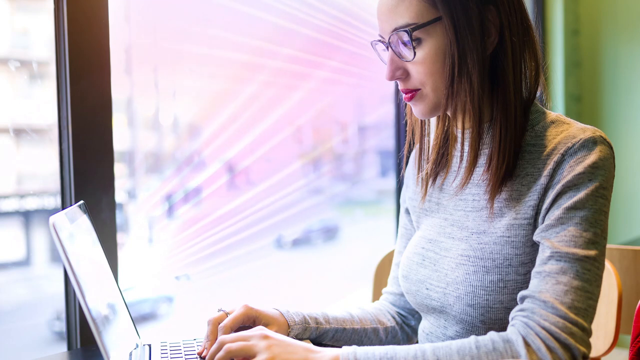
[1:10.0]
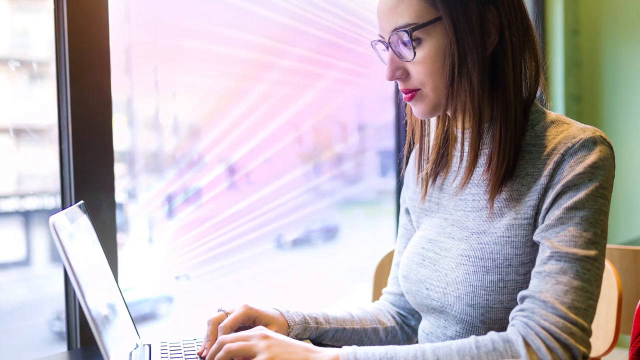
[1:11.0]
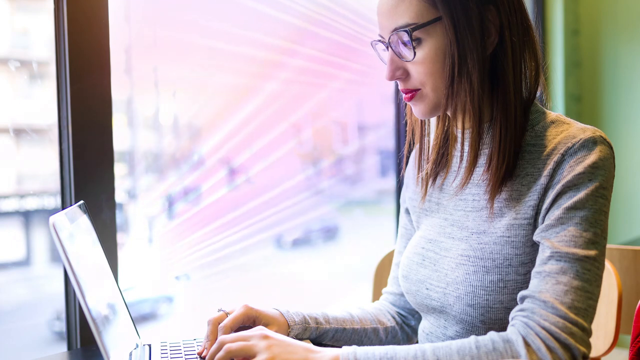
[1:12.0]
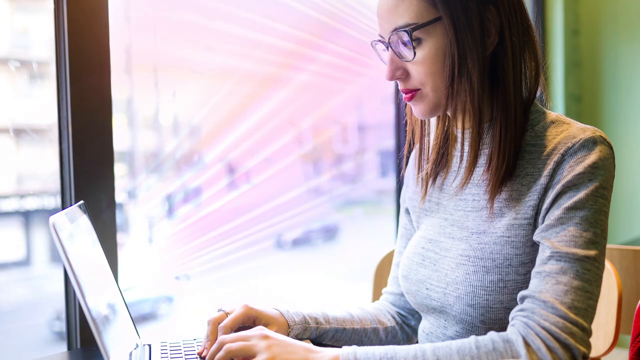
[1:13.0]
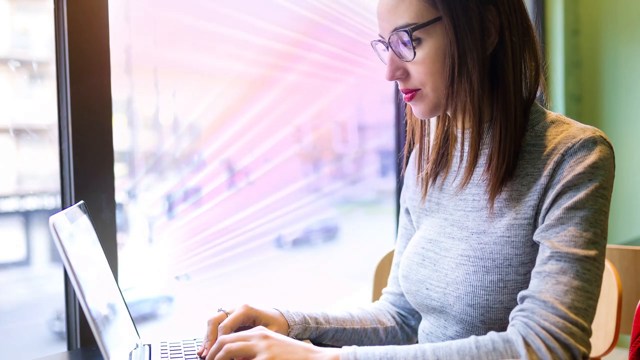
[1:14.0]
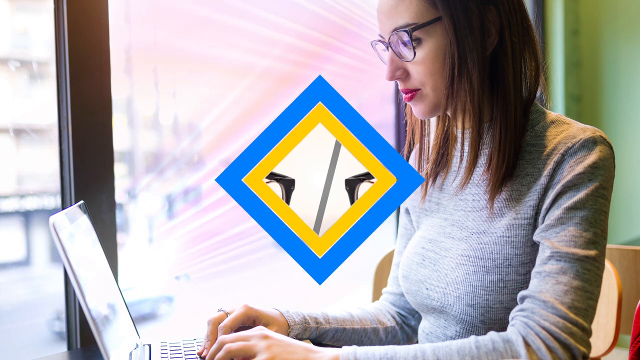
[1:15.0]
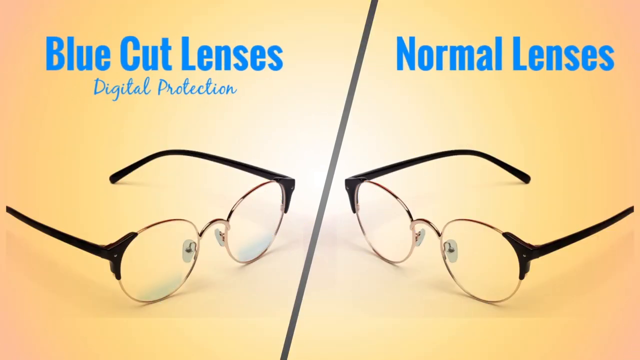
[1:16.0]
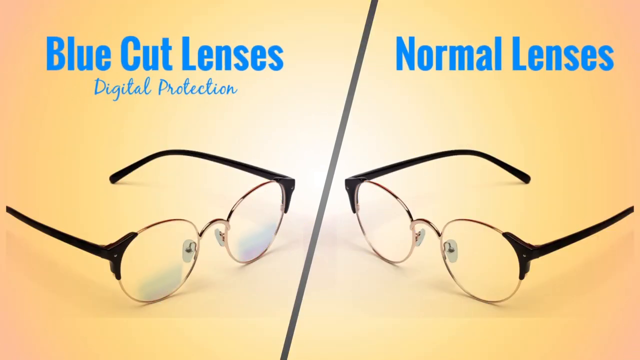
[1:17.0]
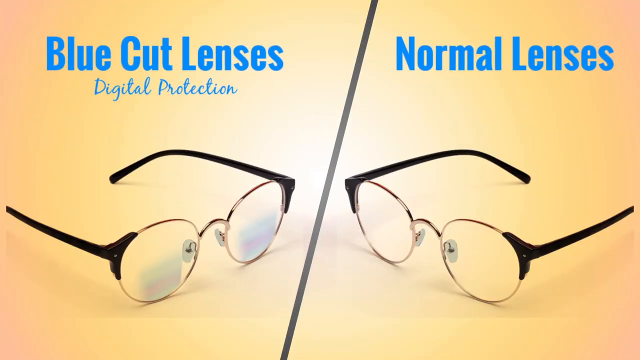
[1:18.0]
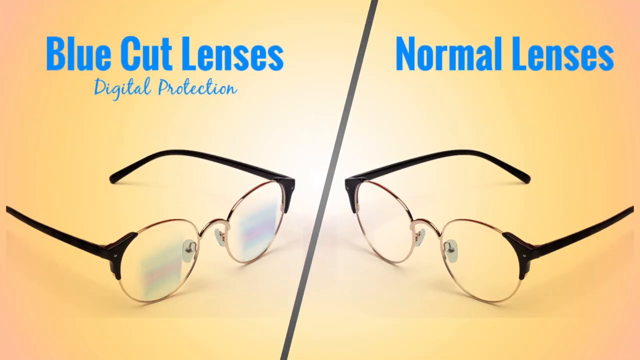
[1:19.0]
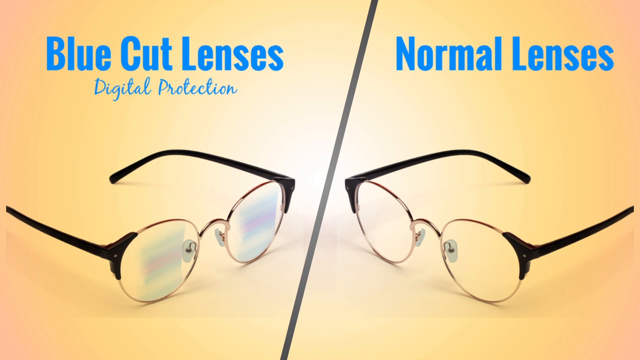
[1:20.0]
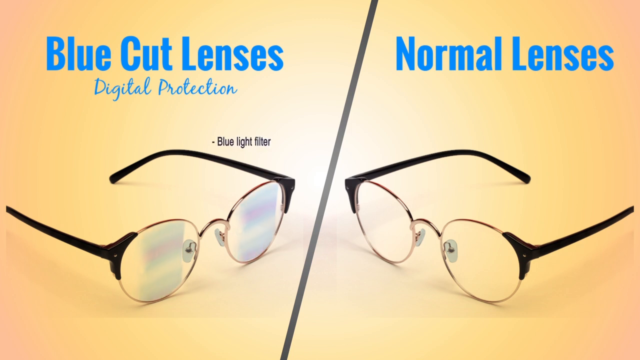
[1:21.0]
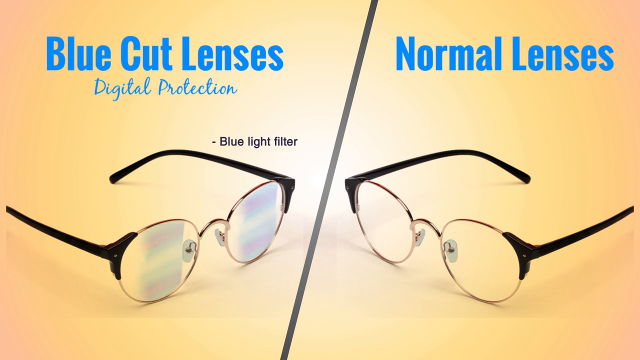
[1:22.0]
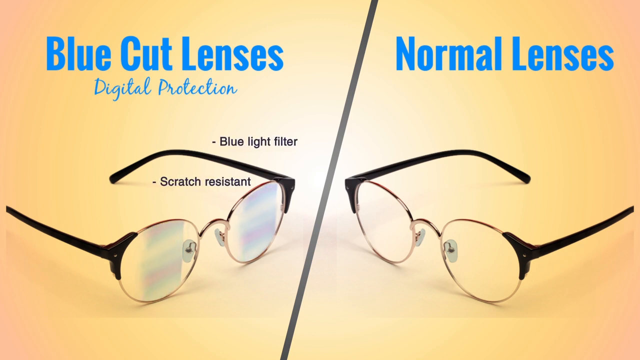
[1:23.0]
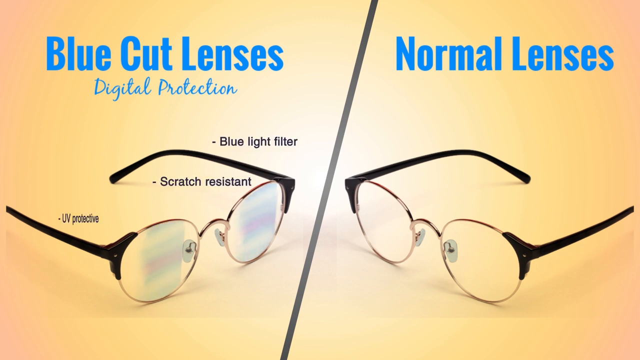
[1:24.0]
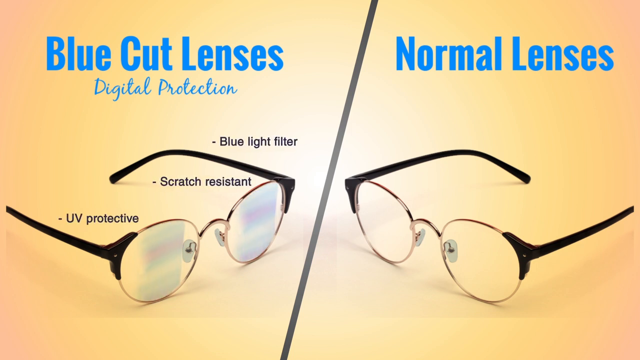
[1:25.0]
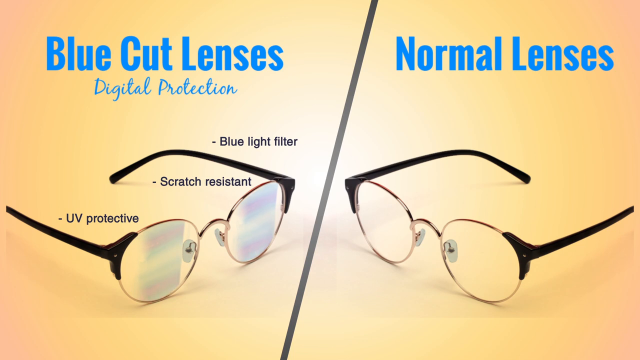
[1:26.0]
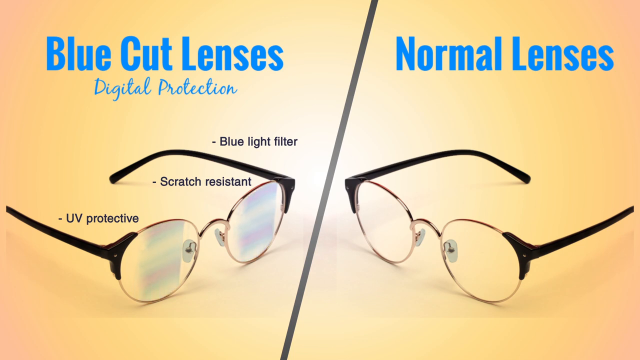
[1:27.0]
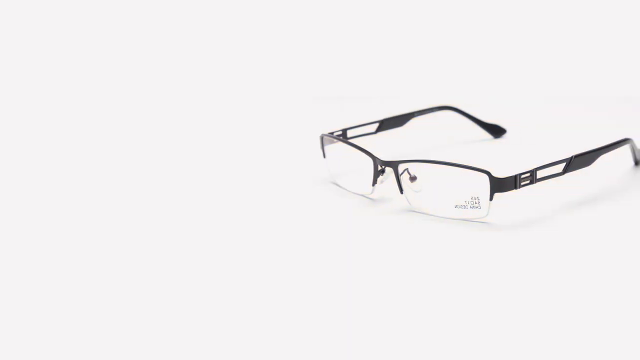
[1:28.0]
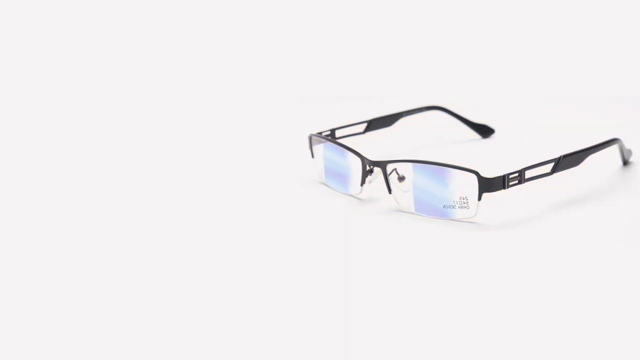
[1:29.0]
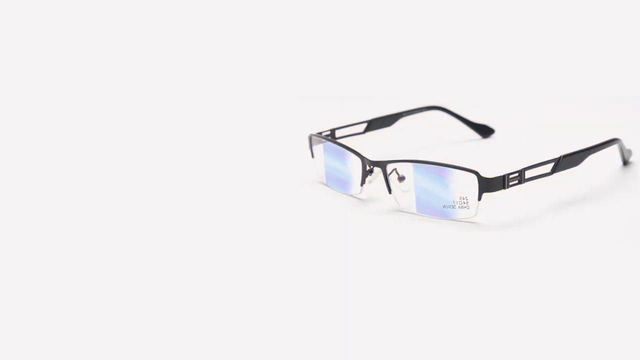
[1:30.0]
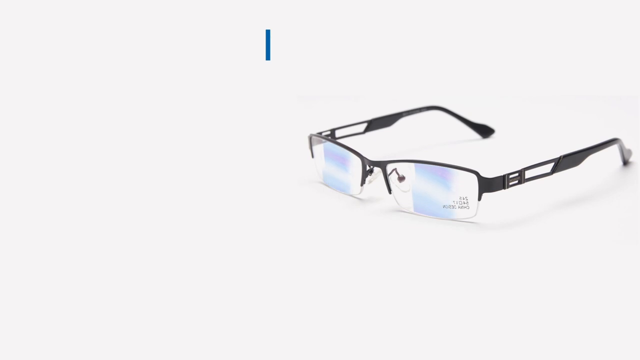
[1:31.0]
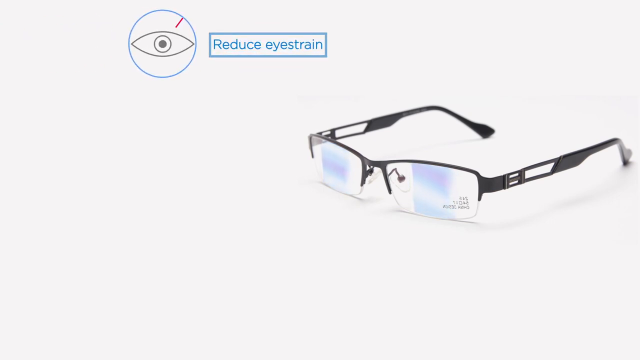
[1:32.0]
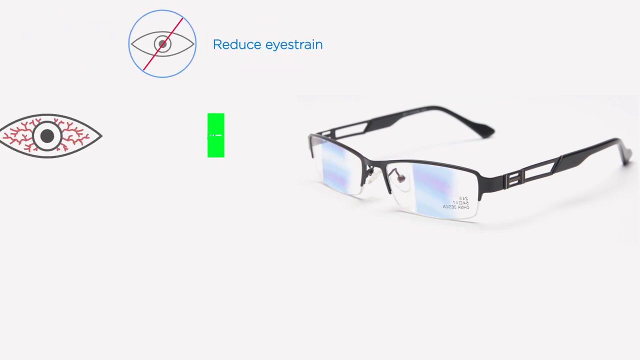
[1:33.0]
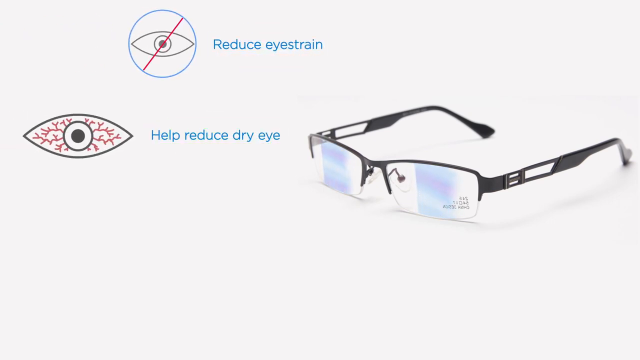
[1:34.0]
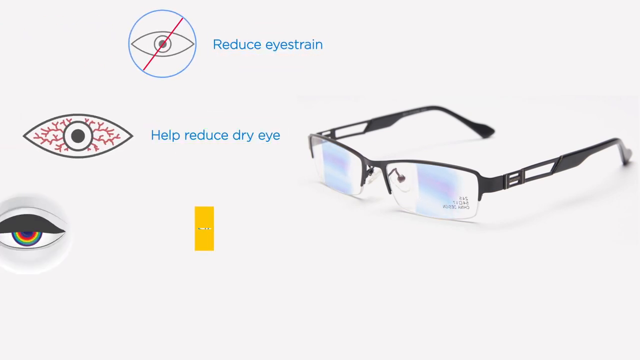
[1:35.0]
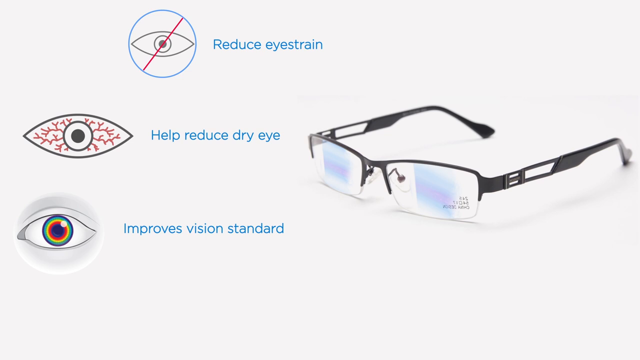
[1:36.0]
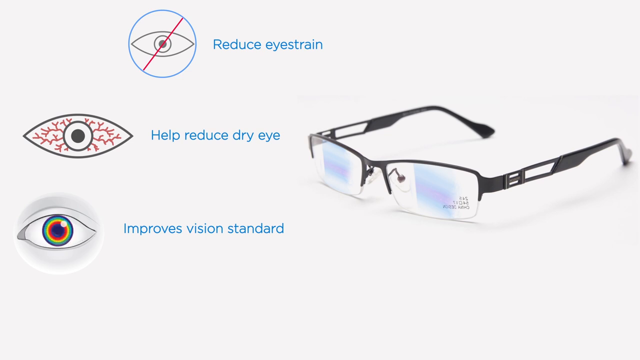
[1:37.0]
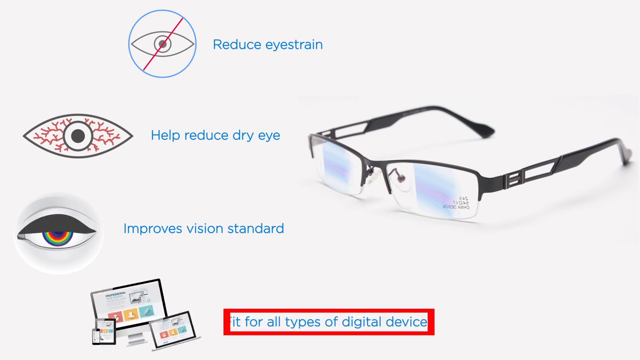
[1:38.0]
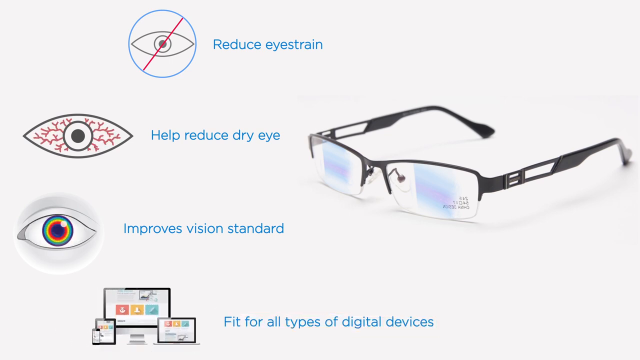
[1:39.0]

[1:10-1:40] An animated image shows a woman seated at a desk, working on her laptop. Glare is shown as white rays of light emitted from the laptop screen towards her face. She has long, straight brown hair down below her shoulders, wears red lipstick and eyeglasses, and is dressed in a light gray turtleneck sweater. The light rays continue to radiate towards her face. The screen then transitions to two pairs of eyewear positioned opposite each other. The eyewear on the left says "blue-cut lenses, digital protection", while the one on the right says "normal lenses". Both lenses are identical in appearance. An animation projects what looks like a square of blue color onto the lenses. Labels pop up: the first says "blue light filter", the next "scratch resistant", and the third "UV protective". The screen then transitions to a different eyewear, this time square-framed with black handles, and again the blue light protection animation appears as pale blue squares reflecting on the lenses.